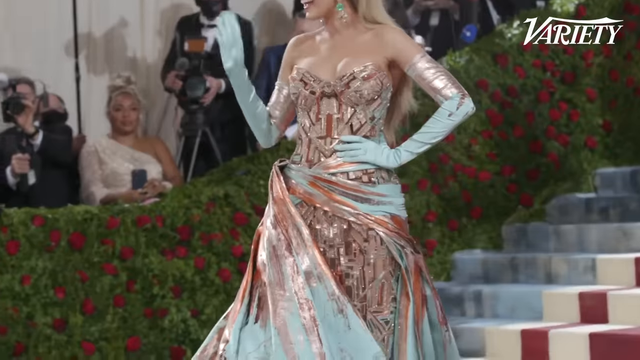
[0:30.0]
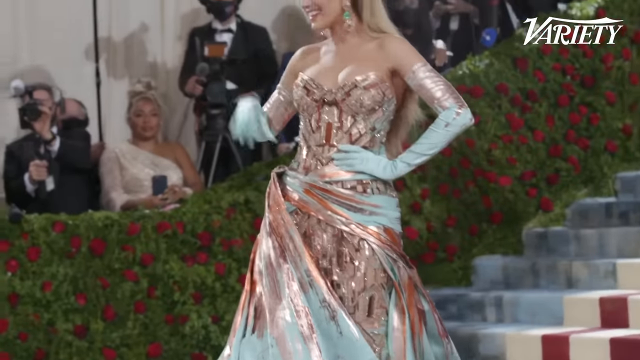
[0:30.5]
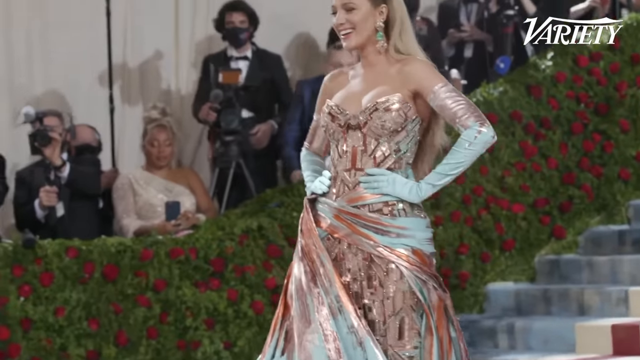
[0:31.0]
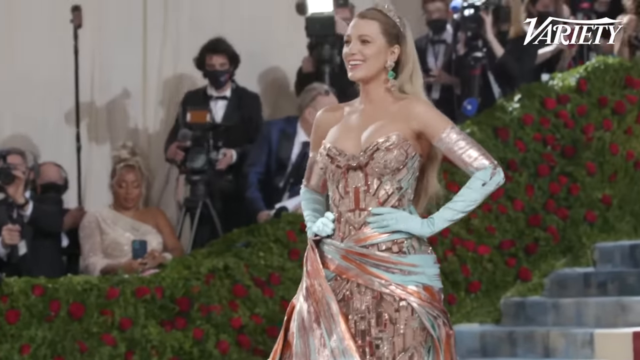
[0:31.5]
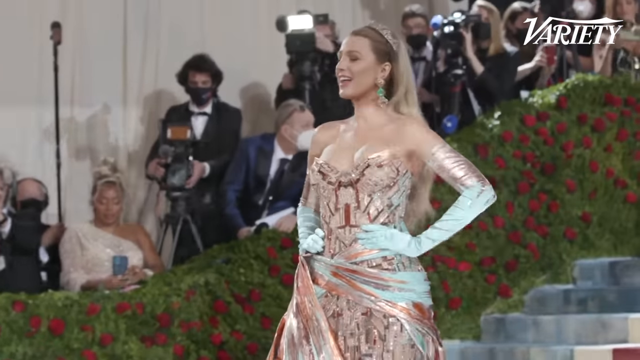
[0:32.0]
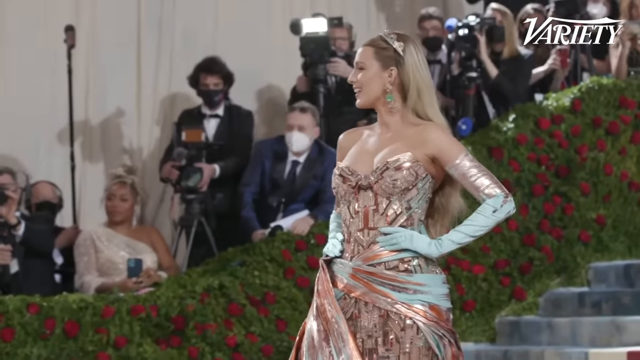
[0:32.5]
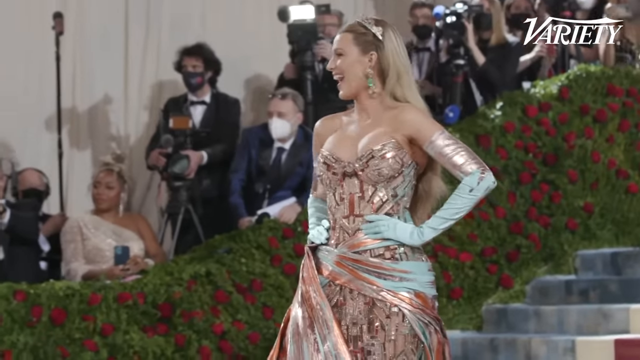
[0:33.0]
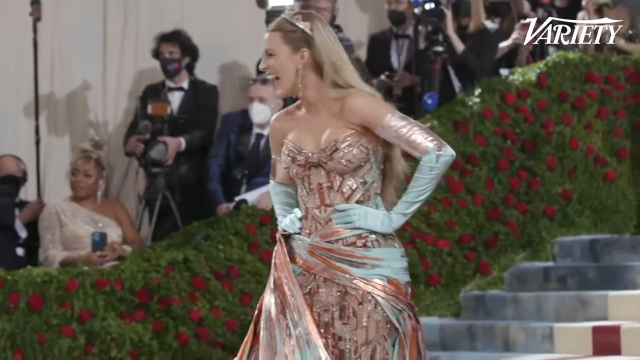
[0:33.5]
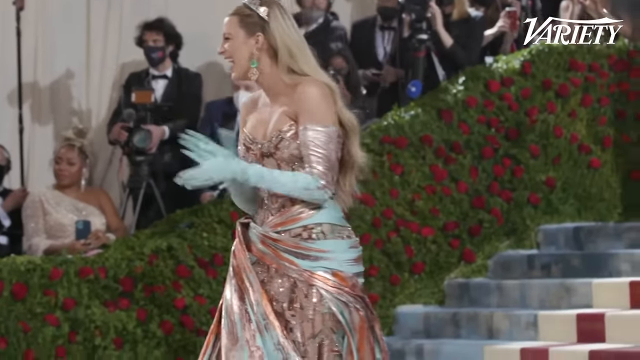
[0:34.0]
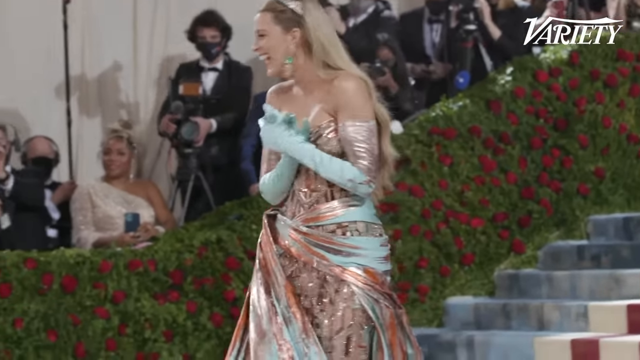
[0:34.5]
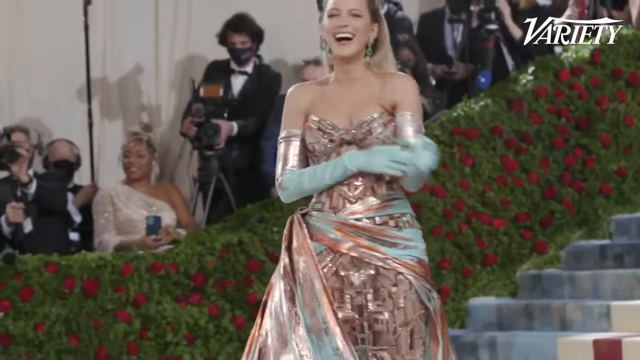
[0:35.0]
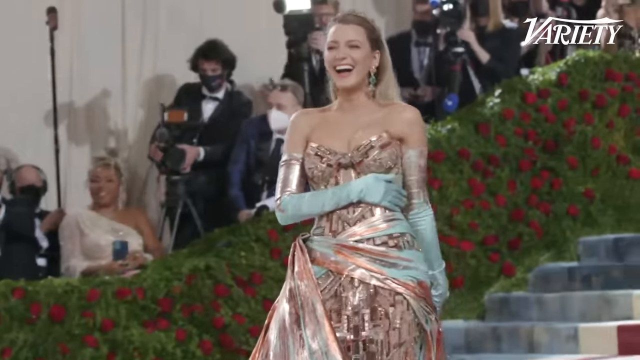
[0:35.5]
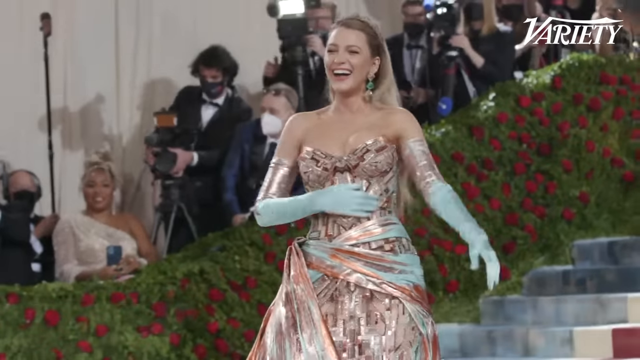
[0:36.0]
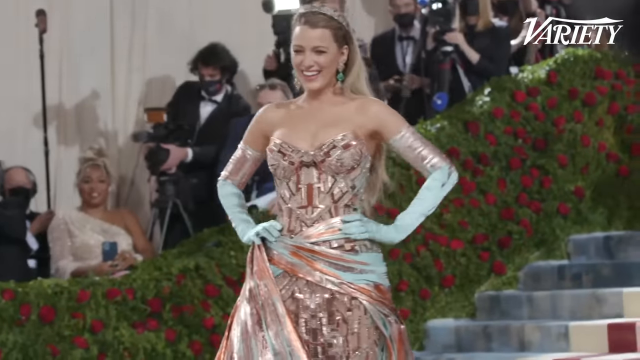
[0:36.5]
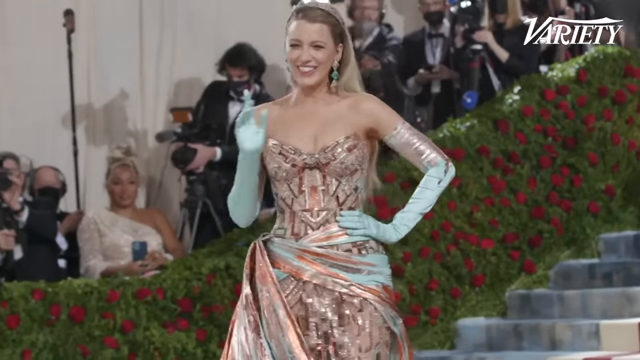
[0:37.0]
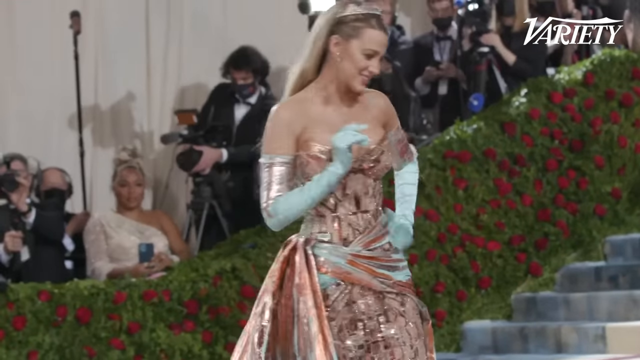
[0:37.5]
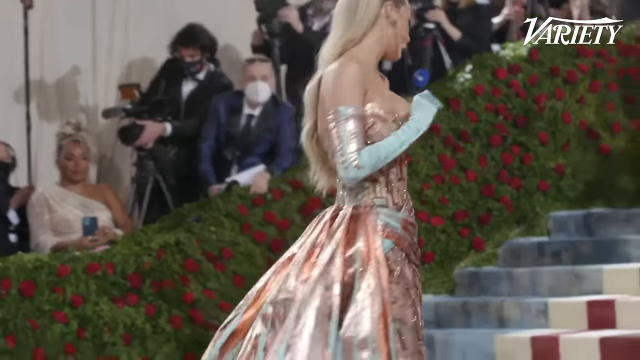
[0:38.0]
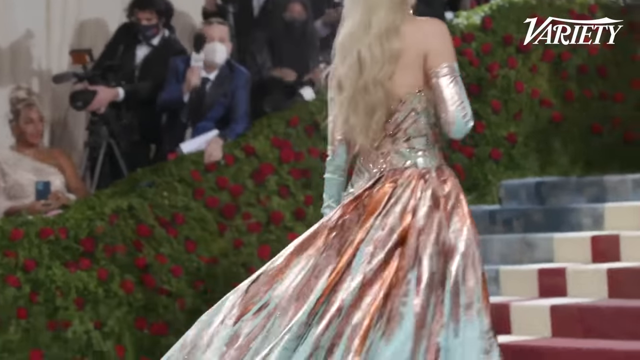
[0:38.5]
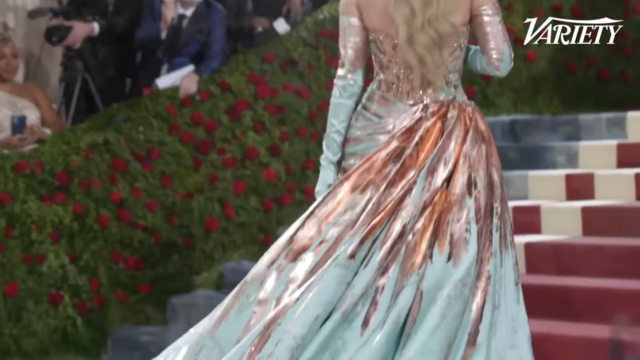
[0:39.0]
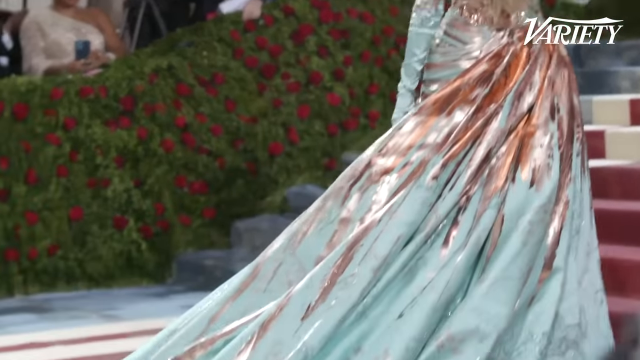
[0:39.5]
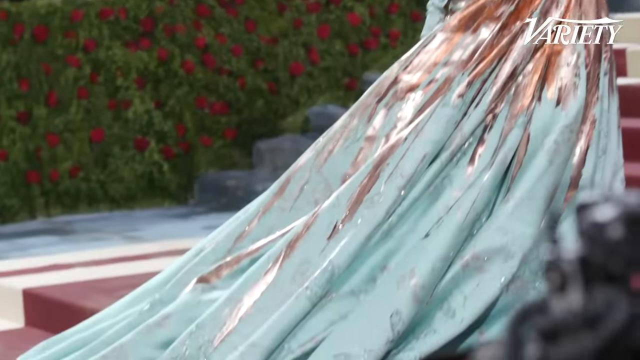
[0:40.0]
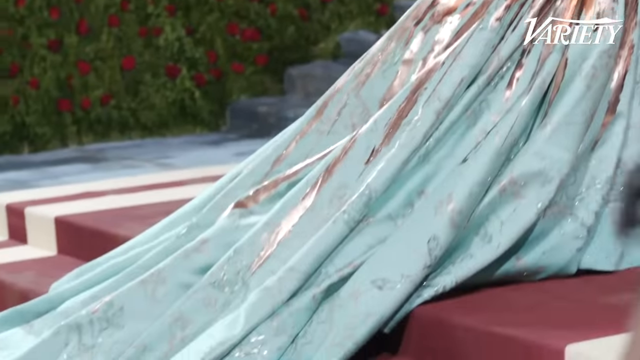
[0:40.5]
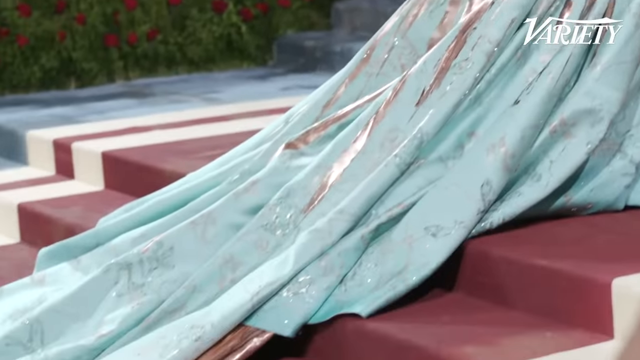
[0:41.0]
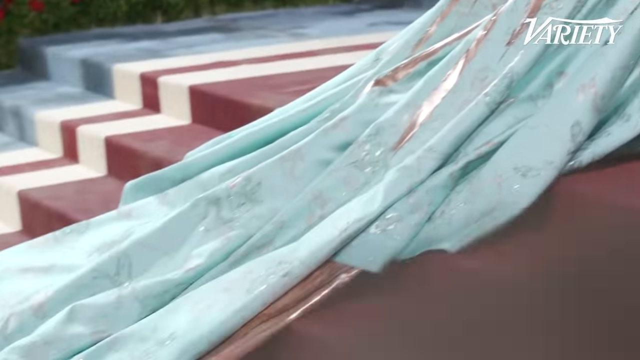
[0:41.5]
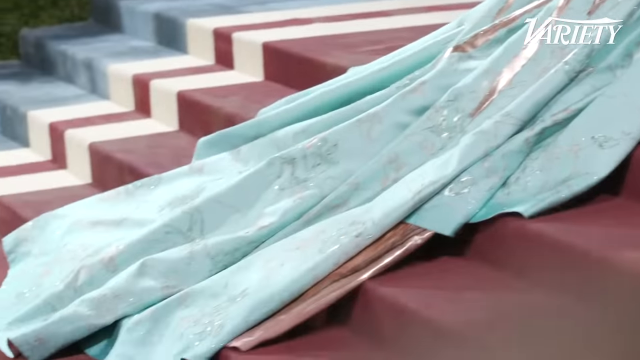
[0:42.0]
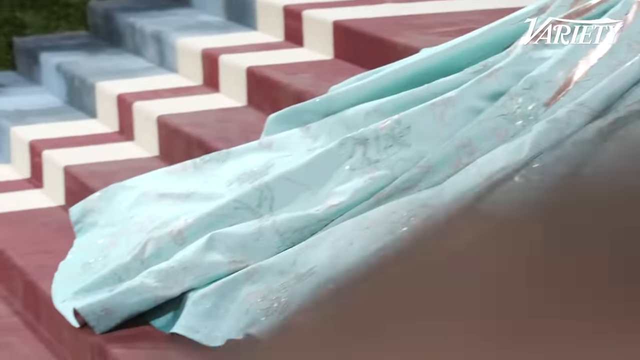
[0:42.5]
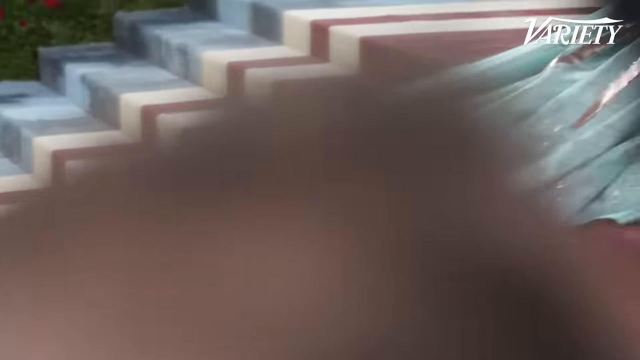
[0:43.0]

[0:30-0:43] Blake Lively, who was waving to the crowd, puts both of her gloved hands onto her hips and smiles. The camera kind of zooms in on her as she laughs and then claps her hands, posing for a bunch of cameras as lights and camera flashes go off. She puts up her finger as if saying one moment, then turns around as if showing the camera people the back of her dress, with the long flowing train that goes down a number of stairs. She appears to be having a good time and laughs. Her blondish hair looks like it has been crimped a little, with a bit of a wave, and goes way past her shoulders to her mid back. She stands on a platform between two sets of stairs; the train goes down four stairs, and in front of her there is another set of stairs. A red runner goes down the middle of the stairs, and the rest of the stairs are blue on the sides. She poses for cameras outside the Met Gala in her metallic, bluish dress.